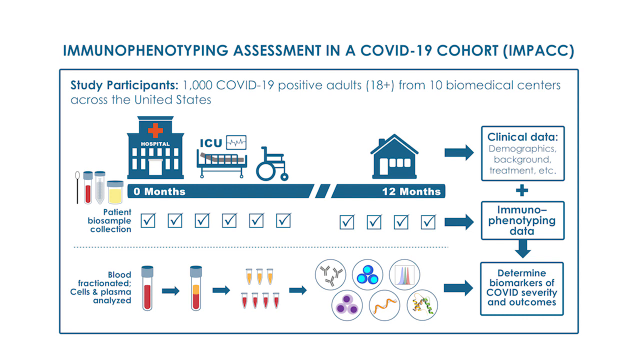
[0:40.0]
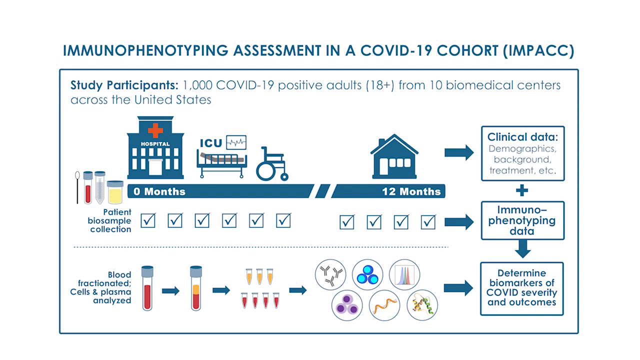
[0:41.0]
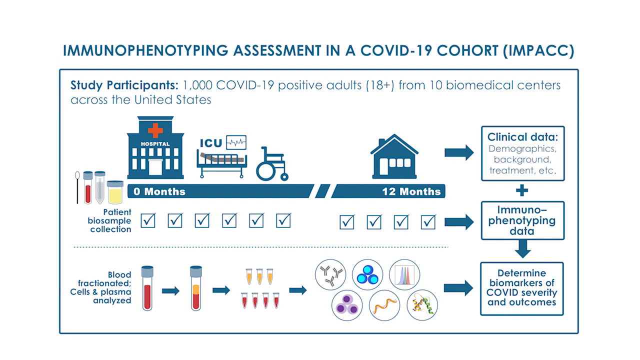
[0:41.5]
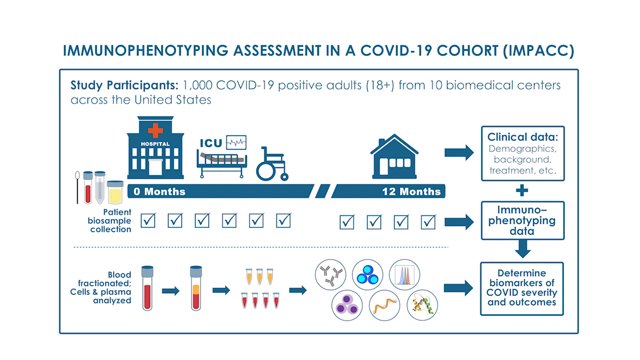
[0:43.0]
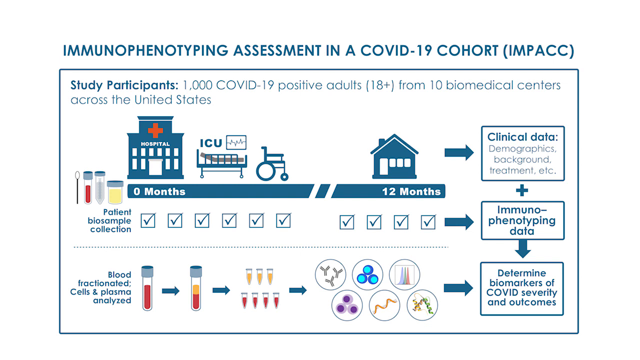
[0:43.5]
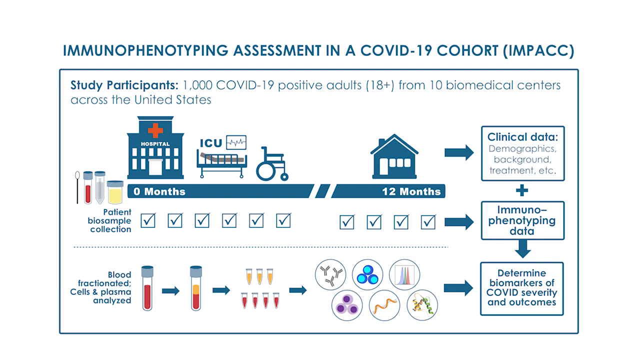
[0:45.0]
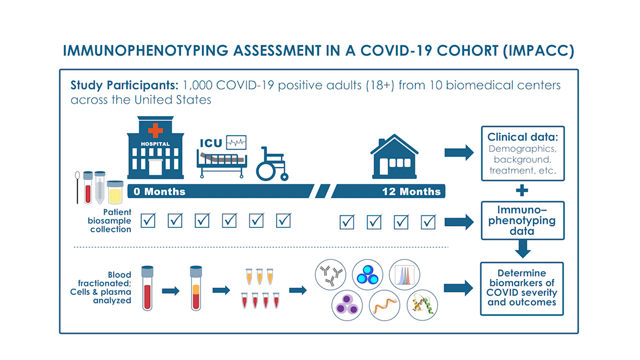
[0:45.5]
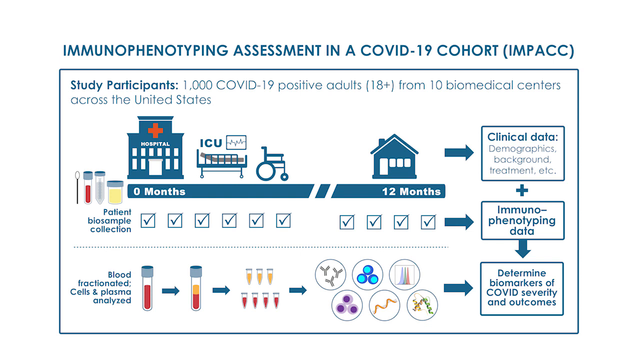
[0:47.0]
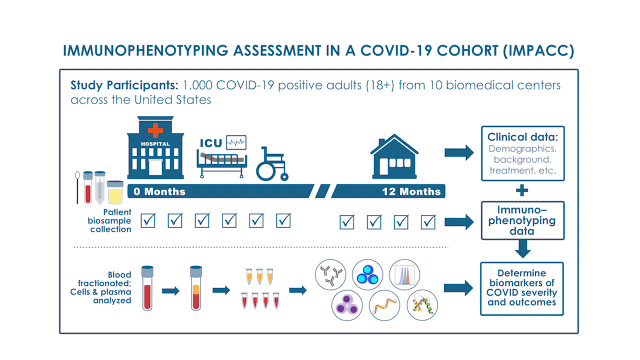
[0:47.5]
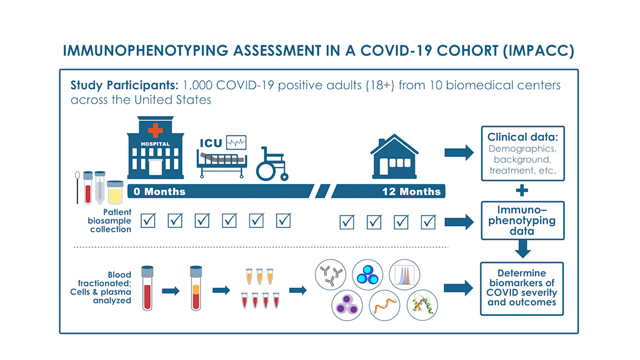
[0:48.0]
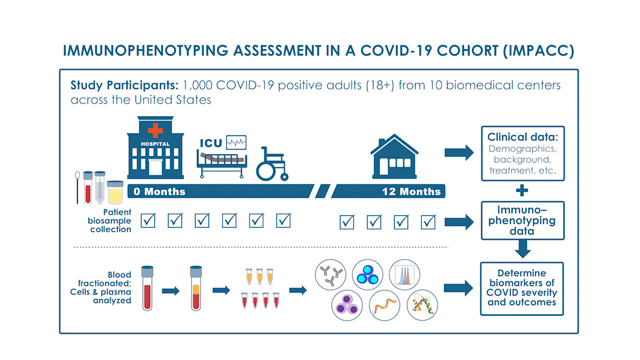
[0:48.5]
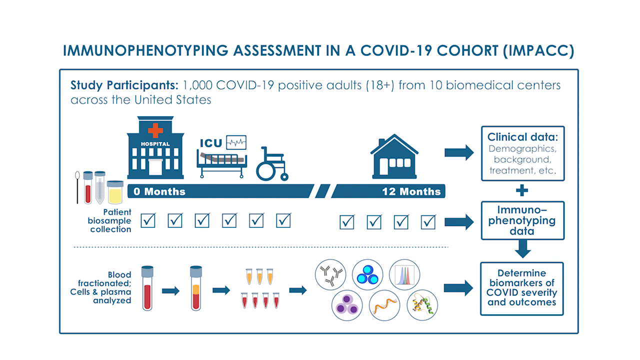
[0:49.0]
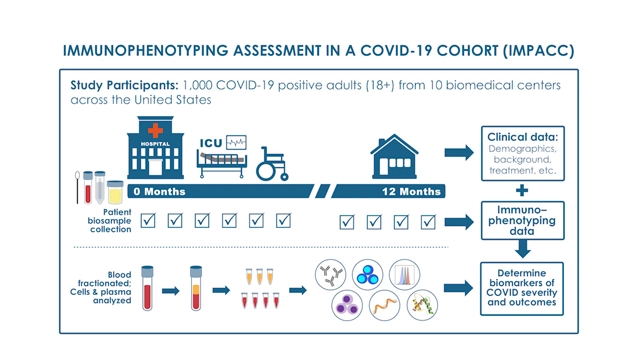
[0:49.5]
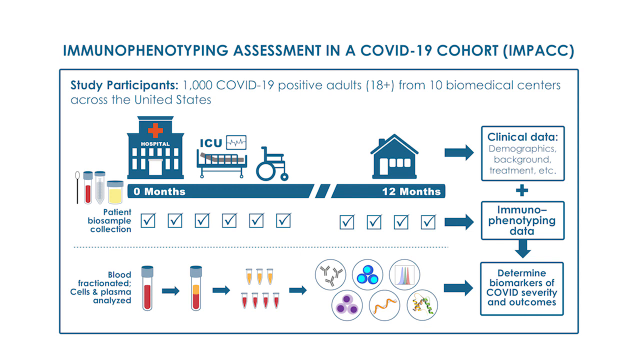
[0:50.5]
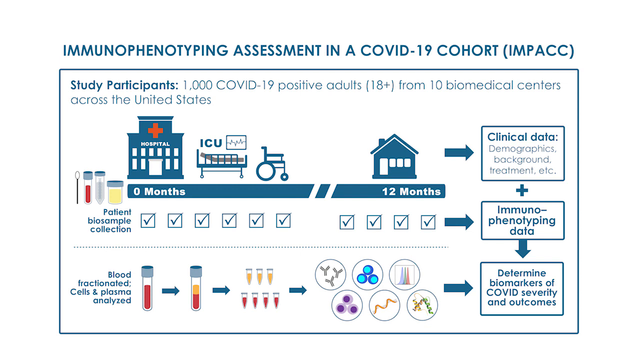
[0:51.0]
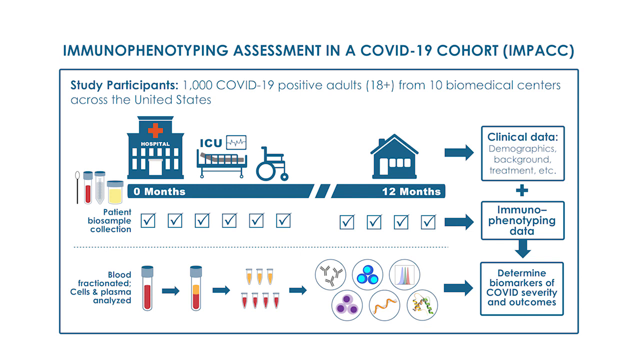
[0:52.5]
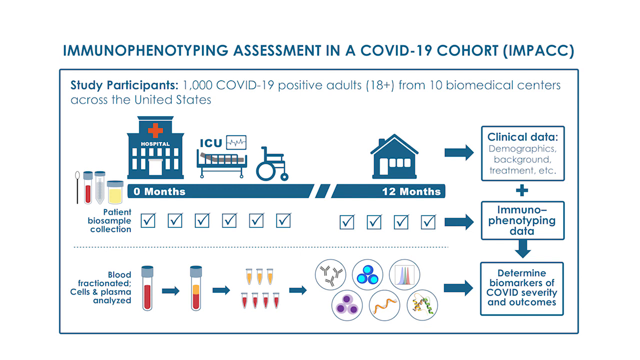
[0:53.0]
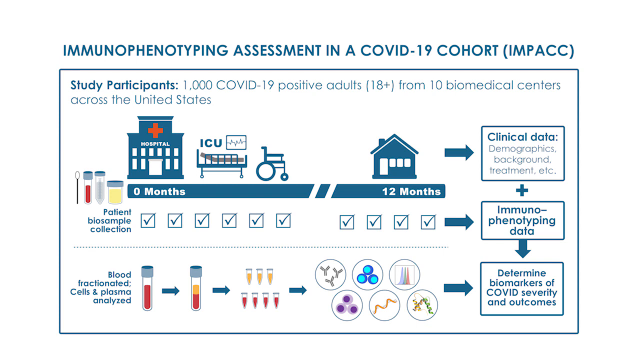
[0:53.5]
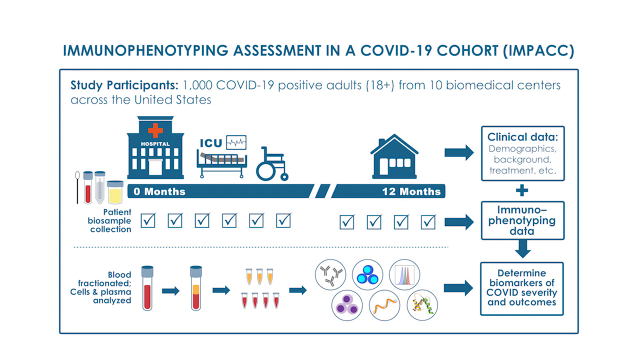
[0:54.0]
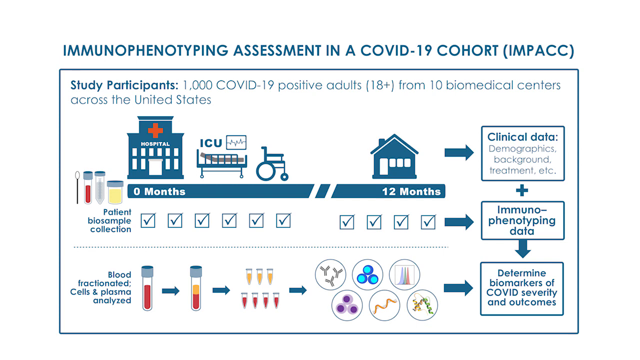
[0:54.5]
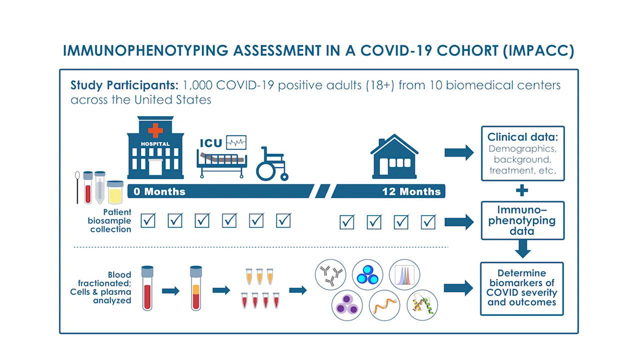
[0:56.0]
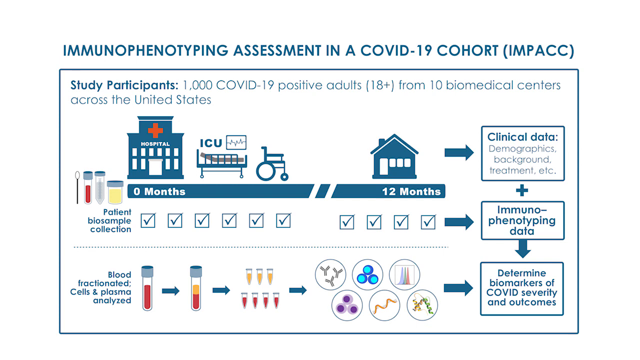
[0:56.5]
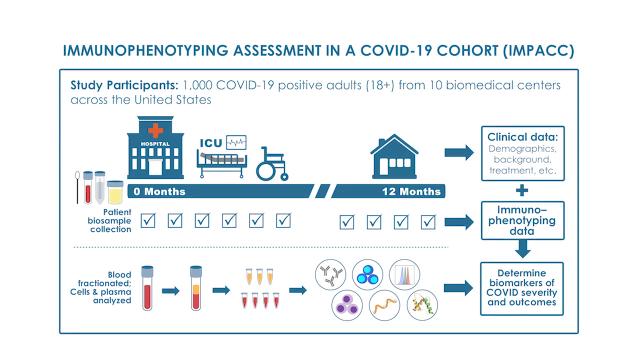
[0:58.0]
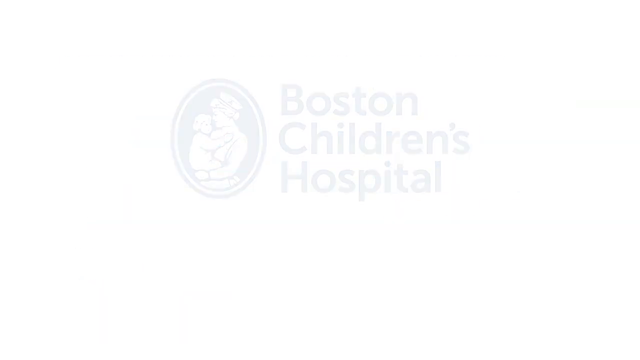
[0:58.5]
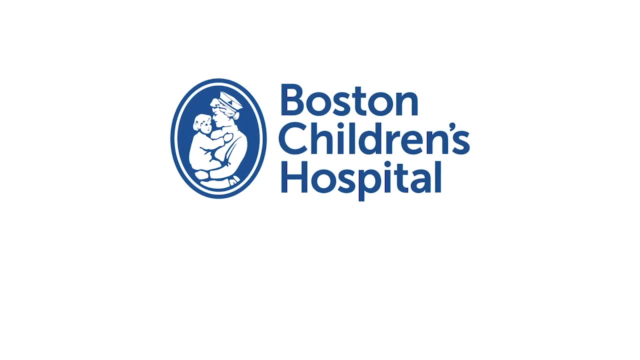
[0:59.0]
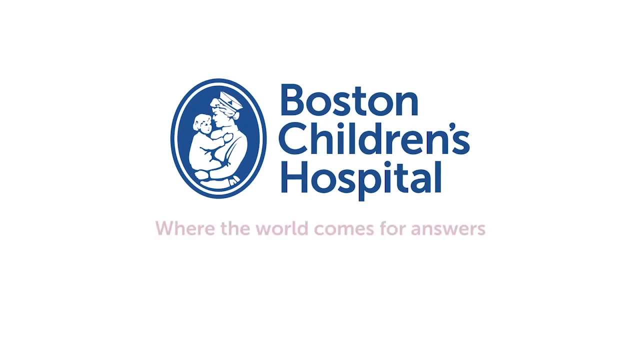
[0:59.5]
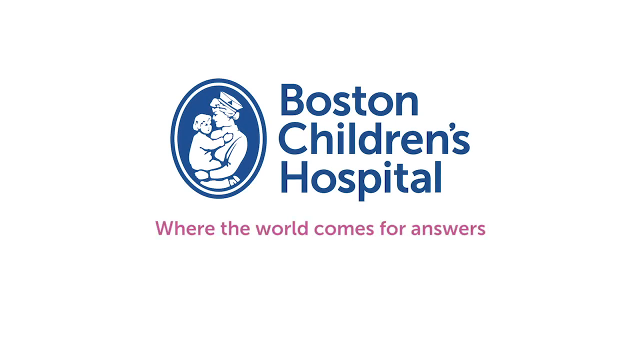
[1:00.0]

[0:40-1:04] A blue frame surrounds a white box. Above the blue line is a square with a slight indentation that rises to another small square topped with a red cross, with the word "hospital" beneath the cross. It has six rows of small blocks, below which are four slightly longer small blocks, and a white square in the middle. The next picture is labeled "ICU", with a small gray box to the right of the word. It shows a blue line coming straight across and going up a little shorter, a rail coming up in the middle of the bed with six lines holding two blue lines together, and a gray object in a semi-reclining position. The next item is a wheelchair with one large round wheel at the back, small wheels at the front, a back with handles, and two armrests. Next is a house: a blue square building with a roof slanting on each side, a small square on the top left, a larger white rectangle, and three small white areas beside it. A blue arrow goes over, followed by clinical data, demographics, background, treatment, et cetera.